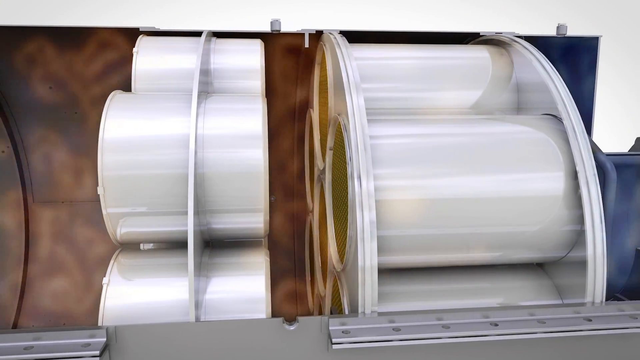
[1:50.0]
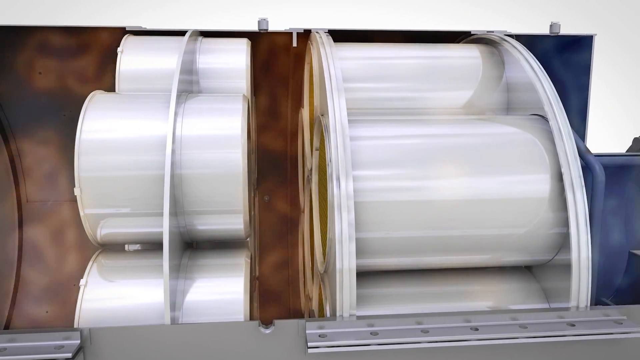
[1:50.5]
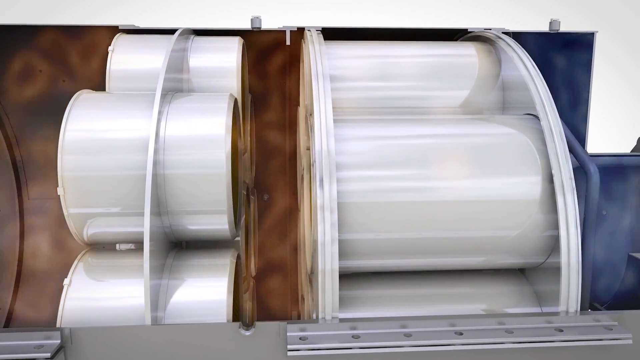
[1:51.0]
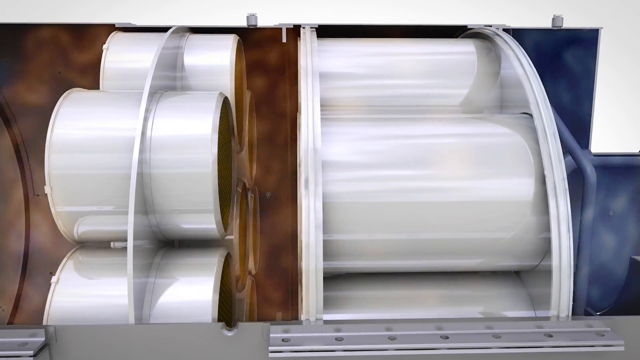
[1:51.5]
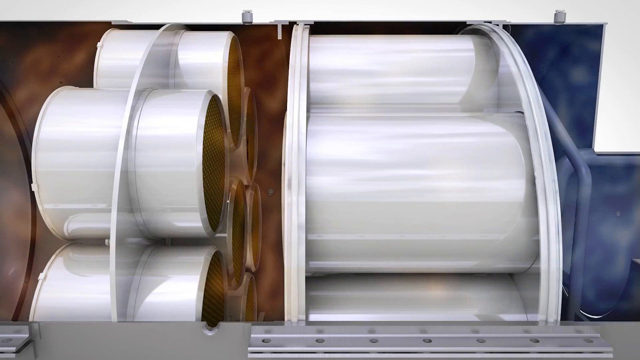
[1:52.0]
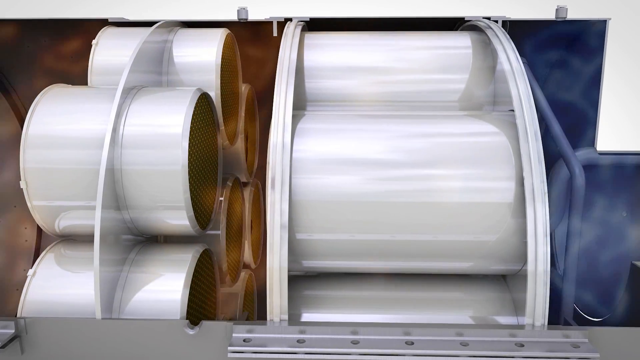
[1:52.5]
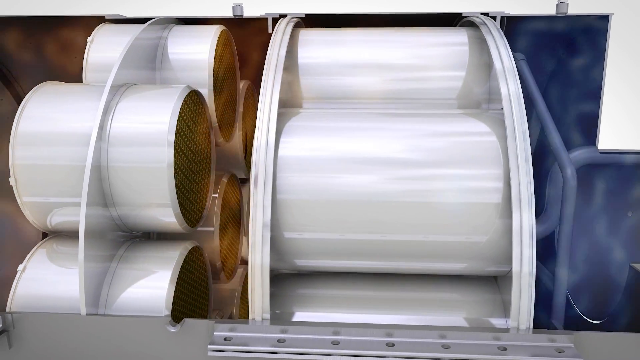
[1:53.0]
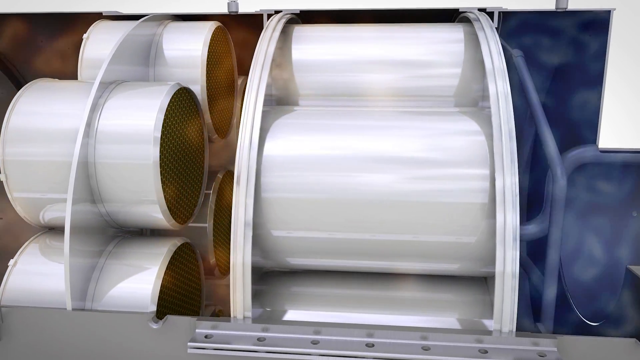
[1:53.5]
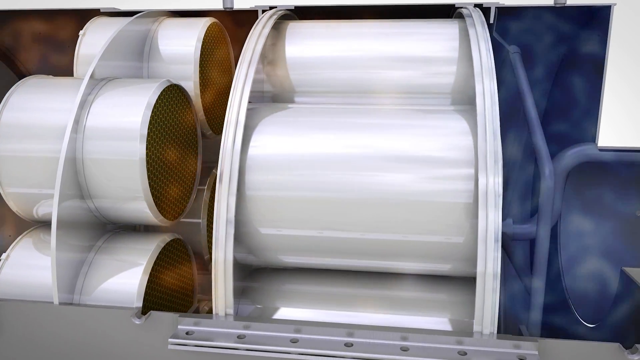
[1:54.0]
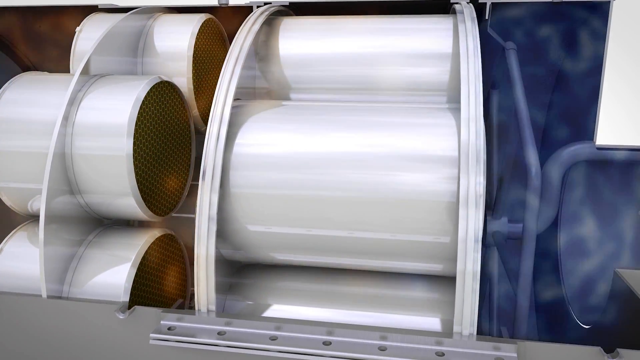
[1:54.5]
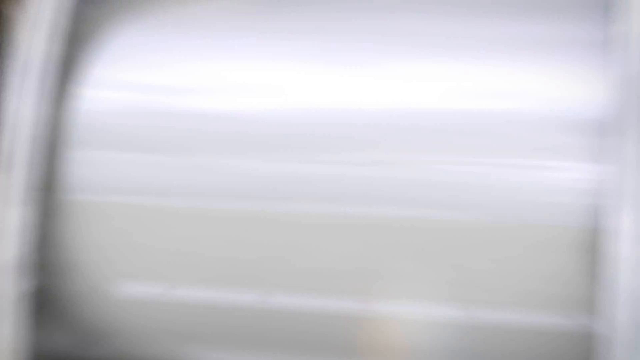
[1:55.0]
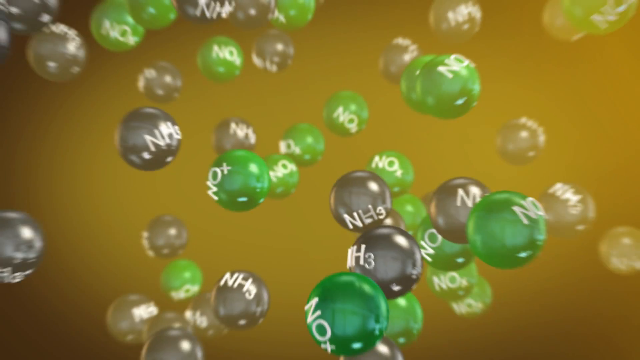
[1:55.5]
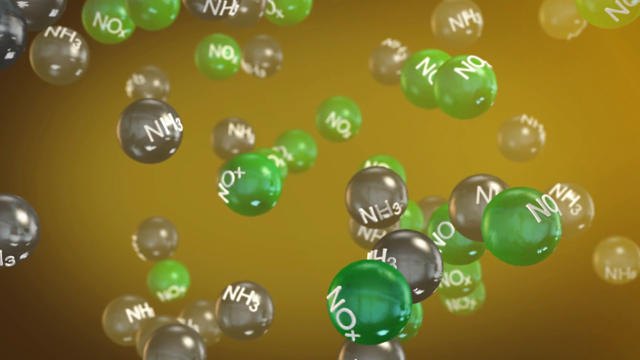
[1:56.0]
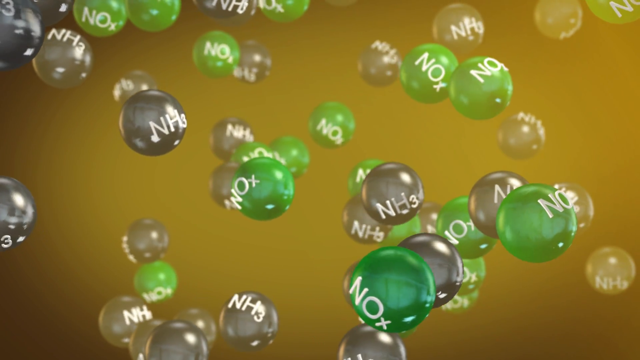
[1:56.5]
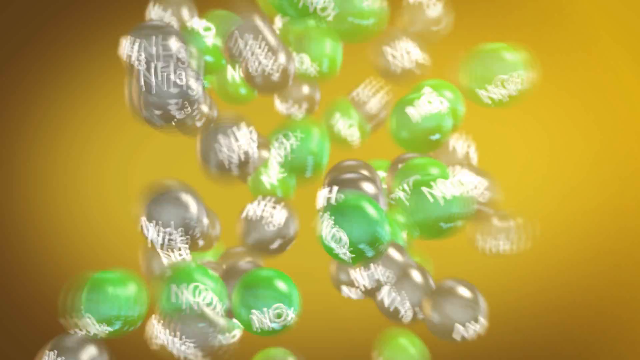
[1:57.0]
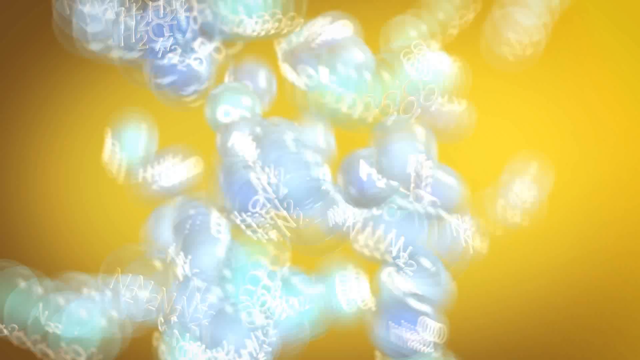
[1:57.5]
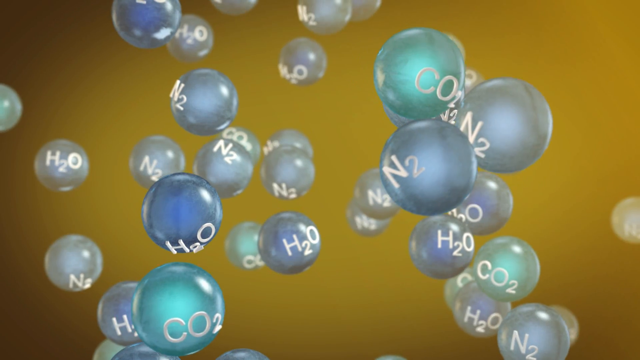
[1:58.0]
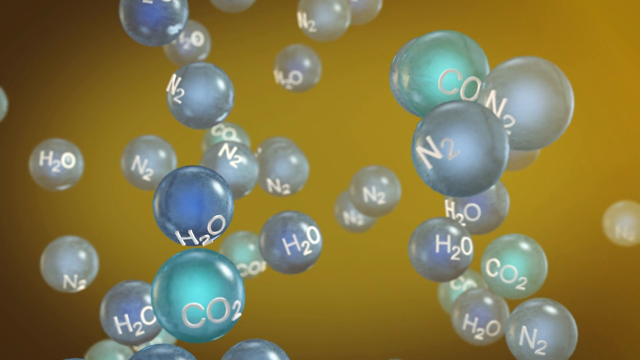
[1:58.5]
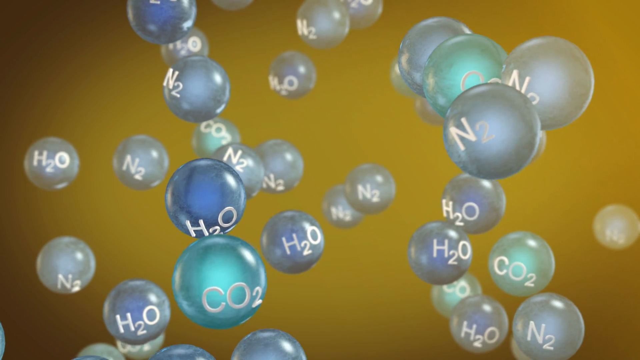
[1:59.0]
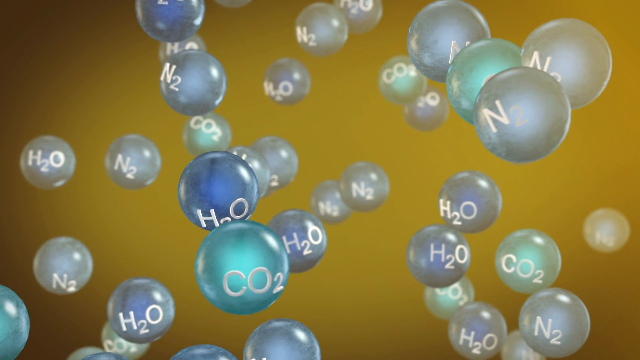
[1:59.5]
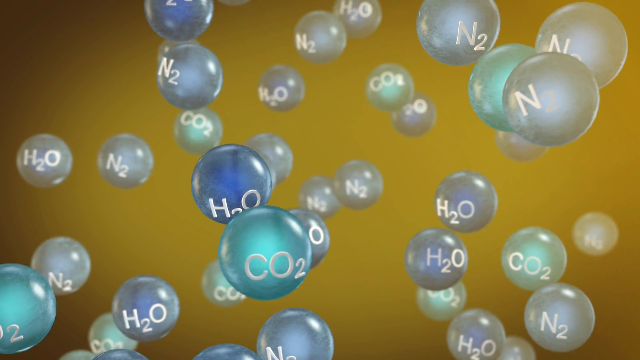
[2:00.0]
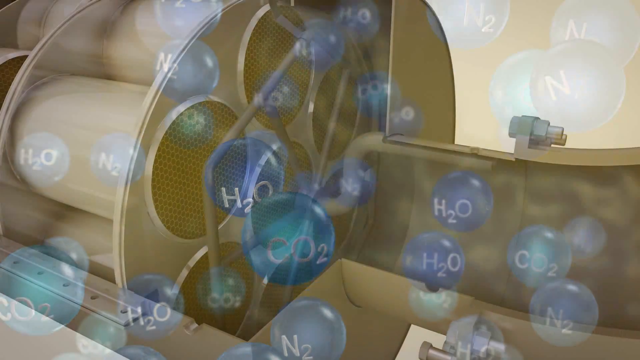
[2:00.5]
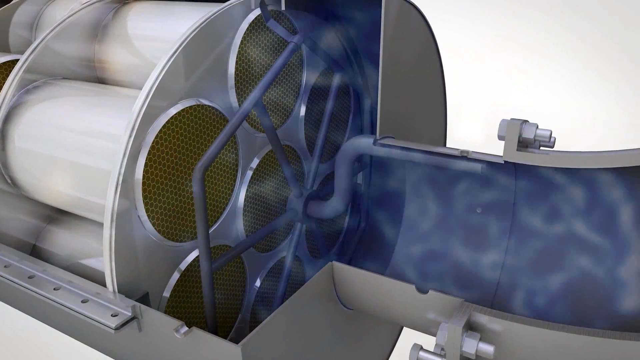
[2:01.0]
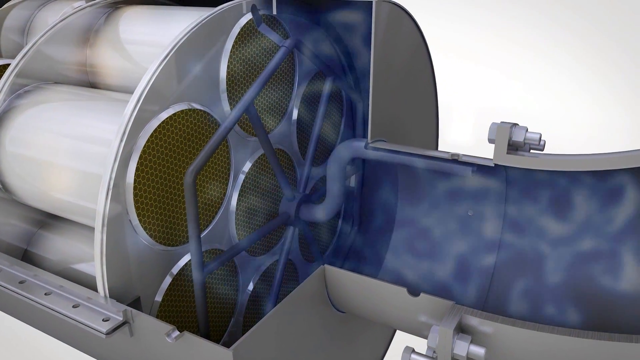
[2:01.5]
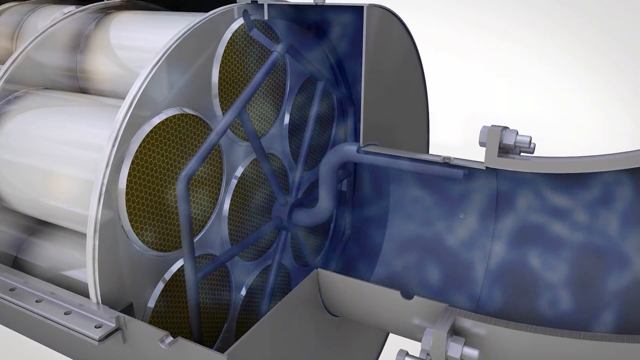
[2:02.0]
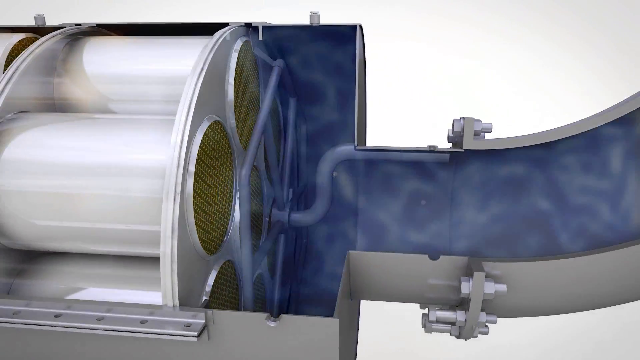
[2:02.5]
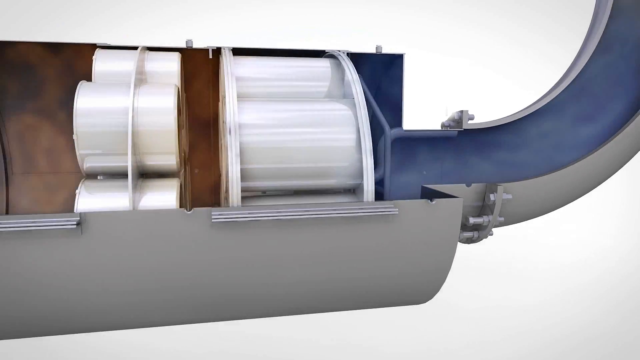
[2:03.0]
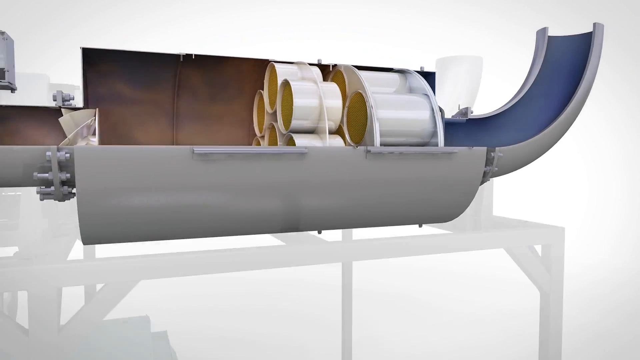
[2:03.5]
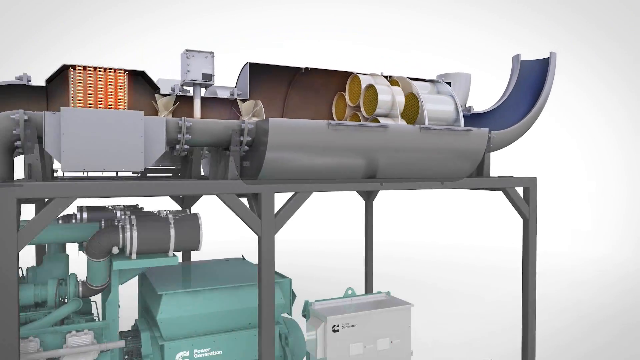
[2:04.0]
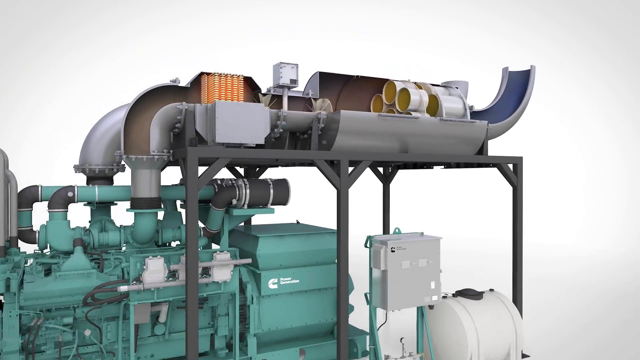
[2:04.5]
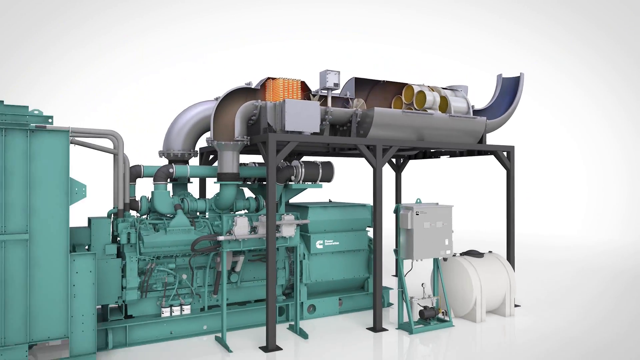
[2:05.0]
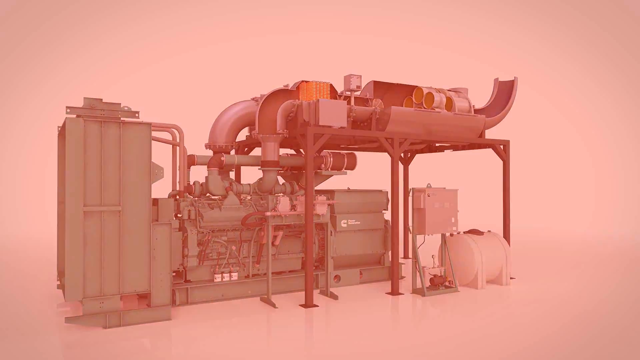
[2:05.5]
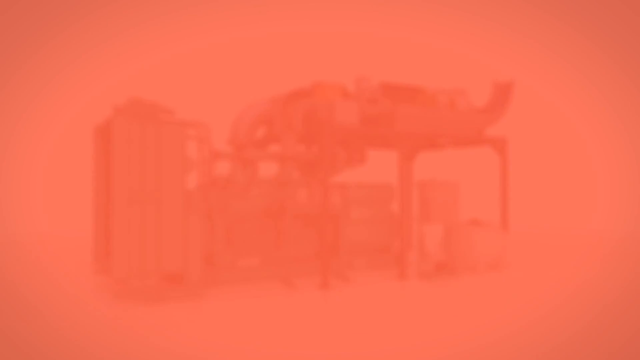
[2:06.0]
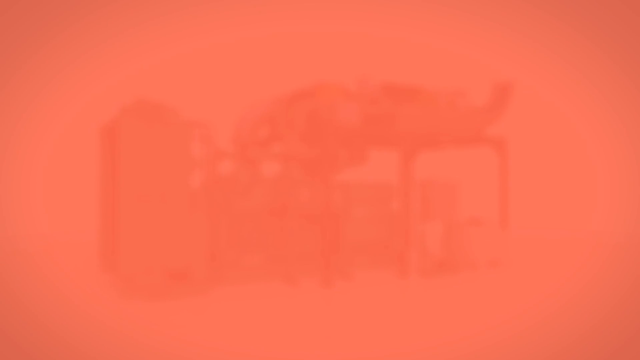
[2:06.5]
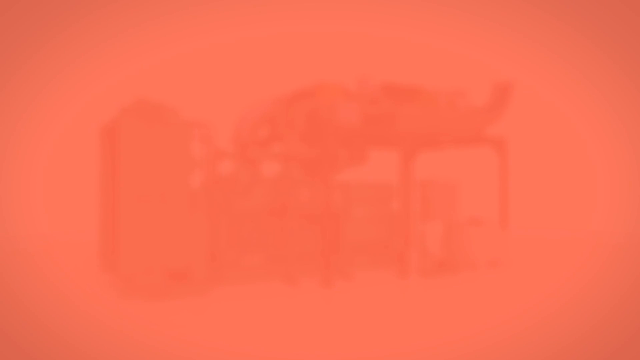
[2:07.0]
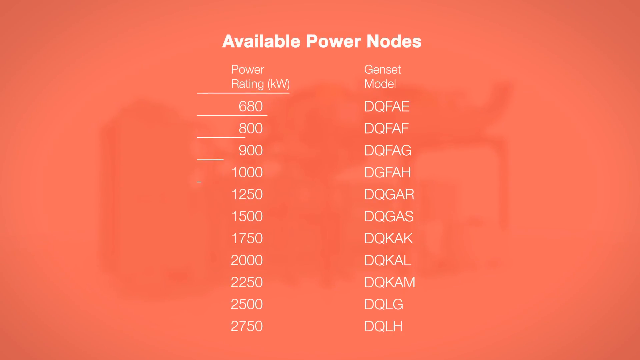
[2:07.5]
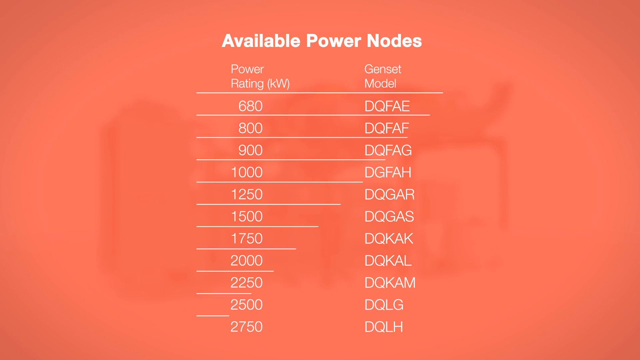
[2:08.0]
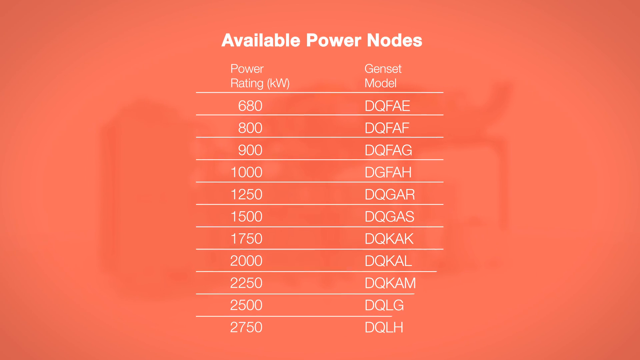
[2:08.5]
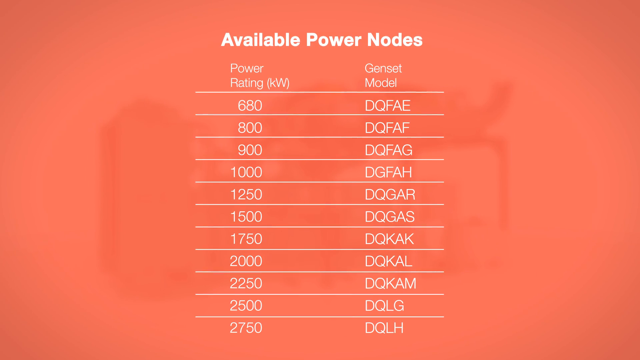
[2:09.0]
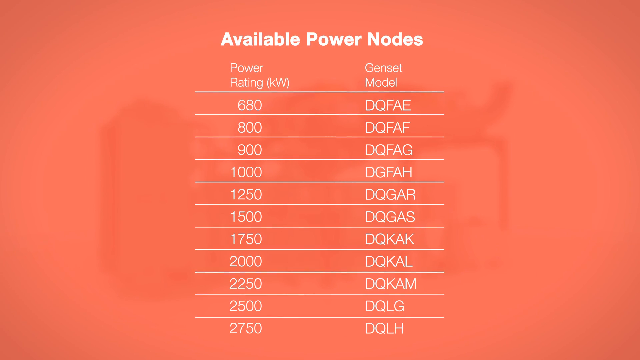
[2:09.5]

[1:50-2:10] The air flows through the second flower-shaped structure and looks blue. The view then changes to a schematic of molecules, with NOx and NH3 molecules depicted as little bubbles on a yellow background, and an animation shows the NOx and NH3 kind of forming together and turning into nitrogen, carbon dioxide and water. As the air flows through the second large petal structure, all of it changes color. The view zooms out to show the entire structure, and the image fades into a red background where a table appears titled "available power nodes." The left column reads "power rating in kilowatts" and the right reads "gen set model." The power ratings range from 680 to 2750, and the gen set models are labeled with different letters starting with DQ.